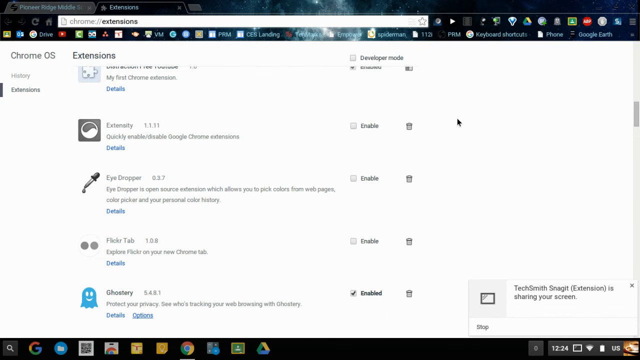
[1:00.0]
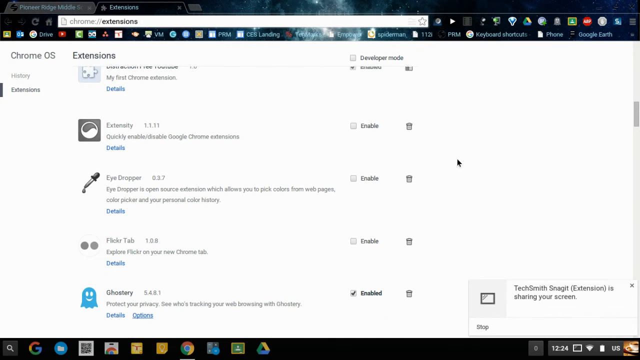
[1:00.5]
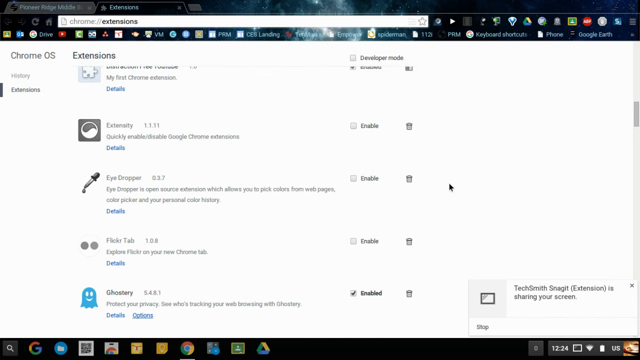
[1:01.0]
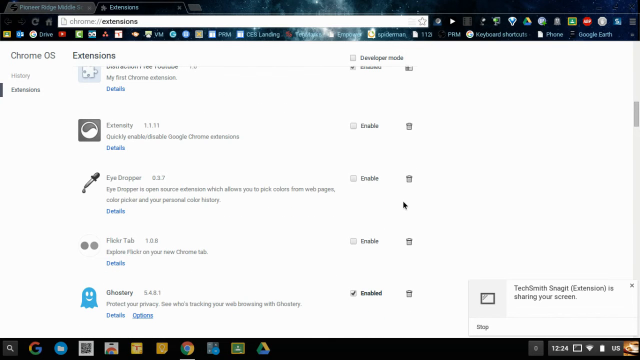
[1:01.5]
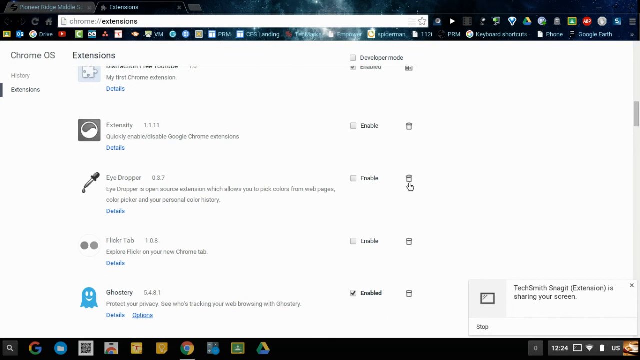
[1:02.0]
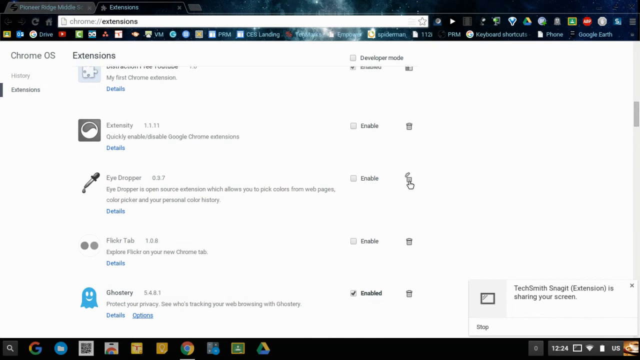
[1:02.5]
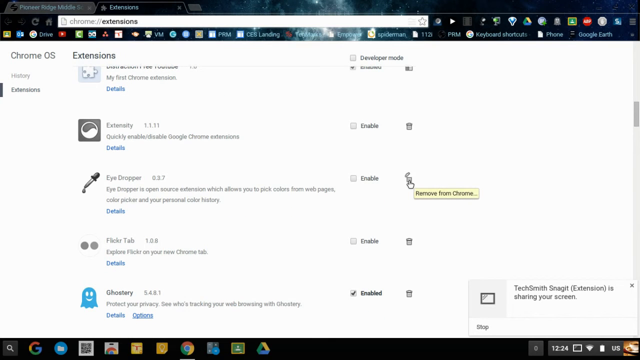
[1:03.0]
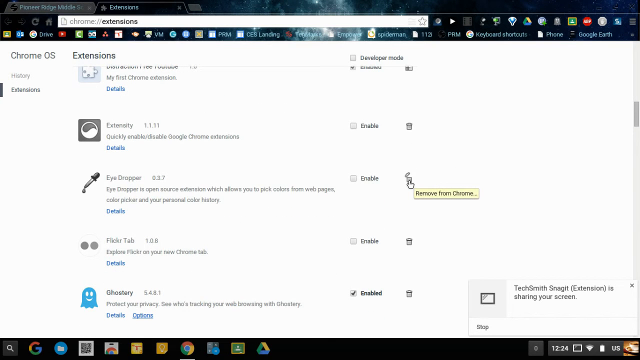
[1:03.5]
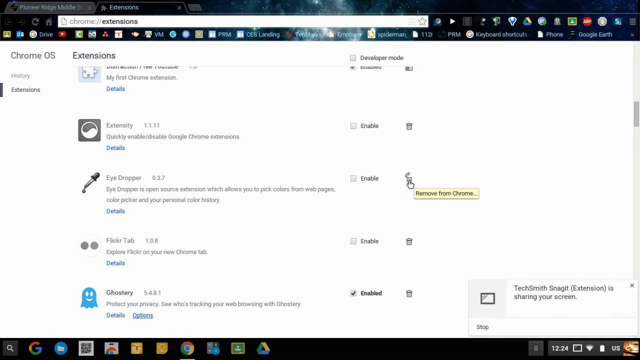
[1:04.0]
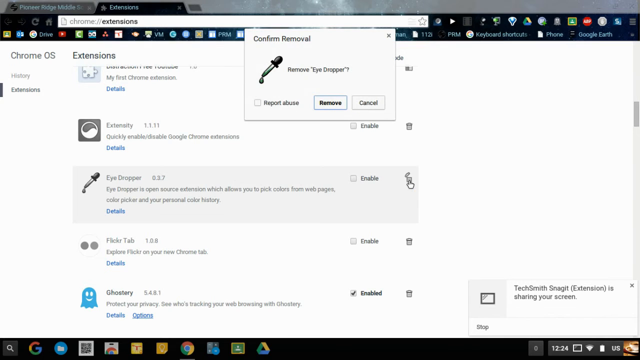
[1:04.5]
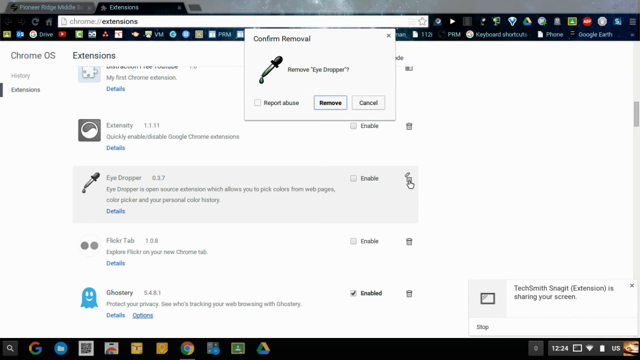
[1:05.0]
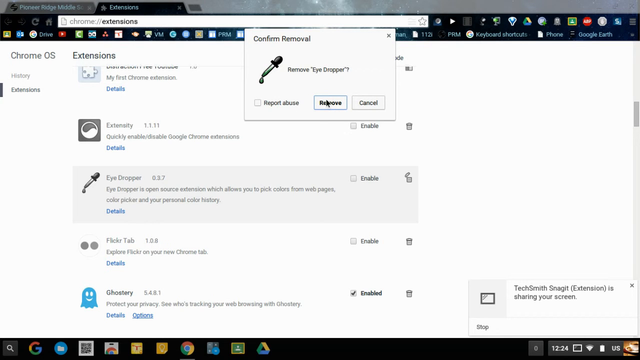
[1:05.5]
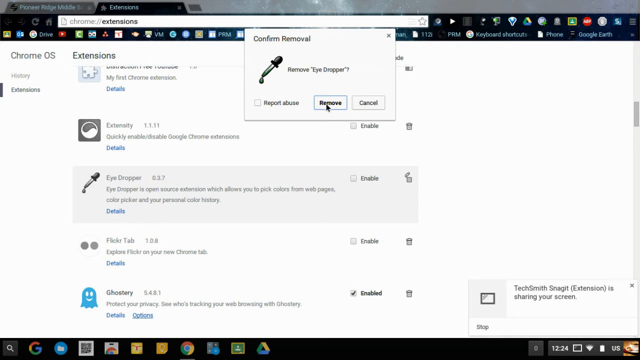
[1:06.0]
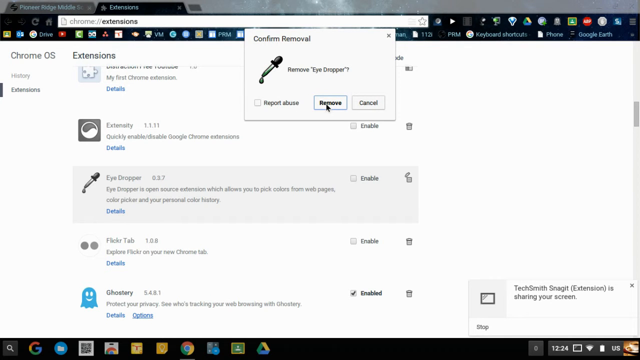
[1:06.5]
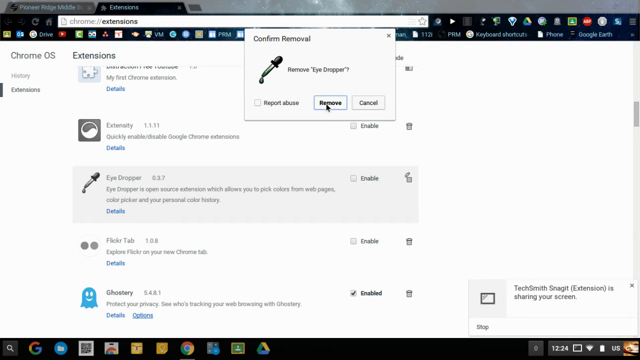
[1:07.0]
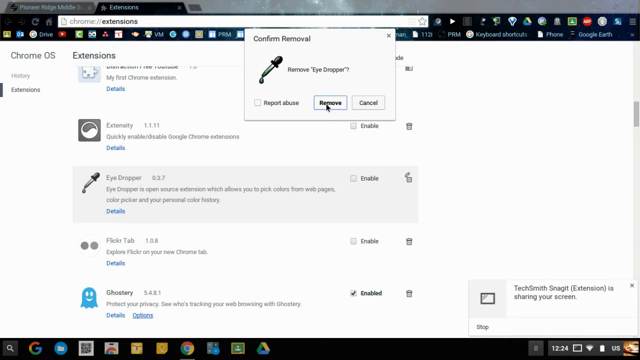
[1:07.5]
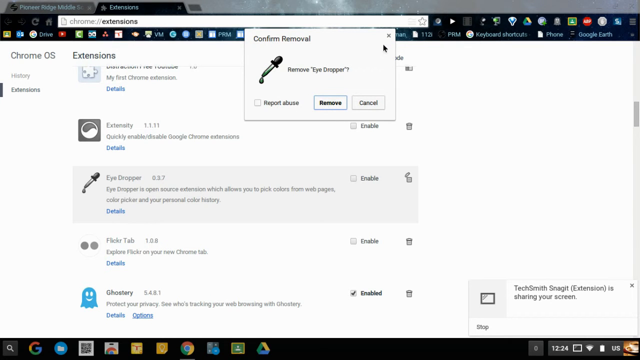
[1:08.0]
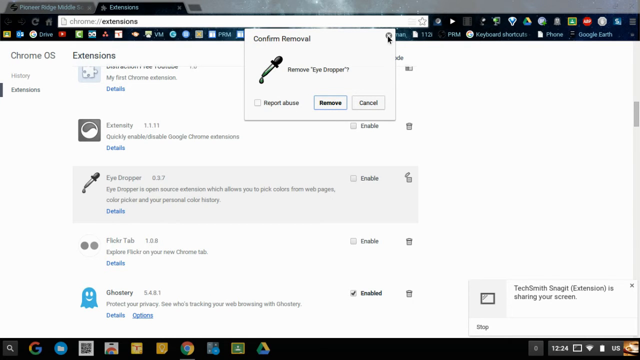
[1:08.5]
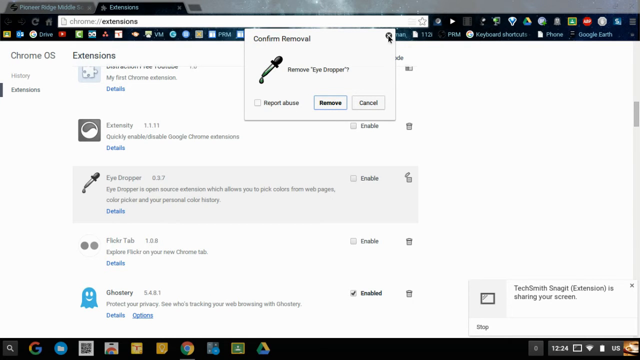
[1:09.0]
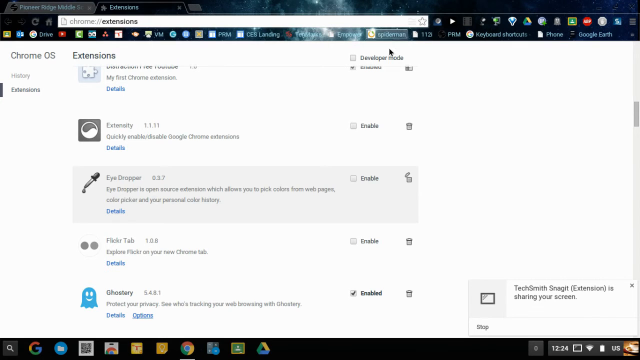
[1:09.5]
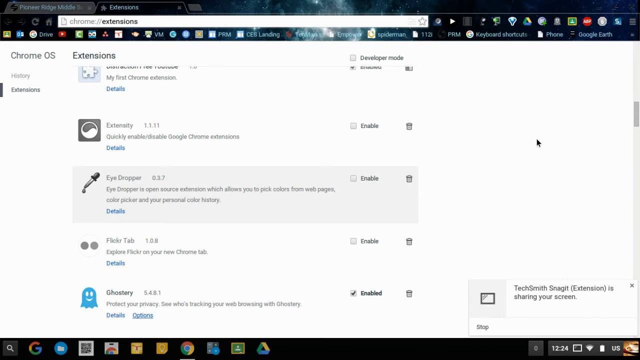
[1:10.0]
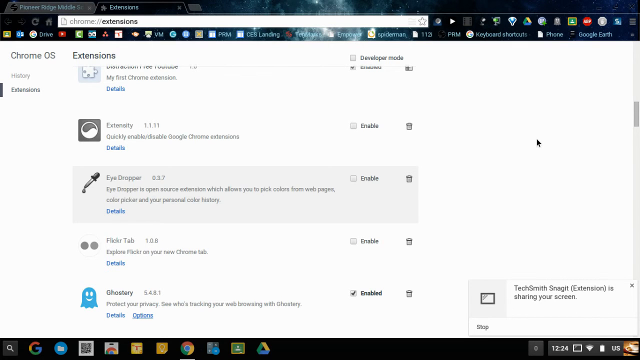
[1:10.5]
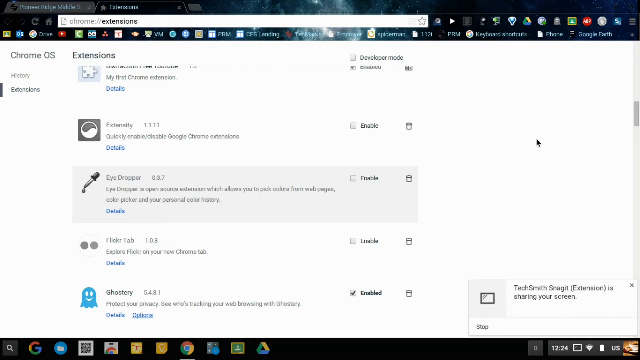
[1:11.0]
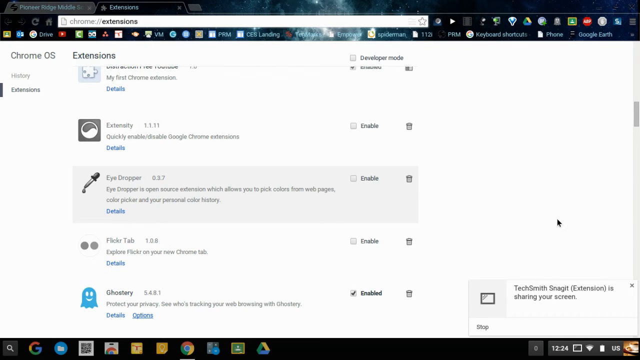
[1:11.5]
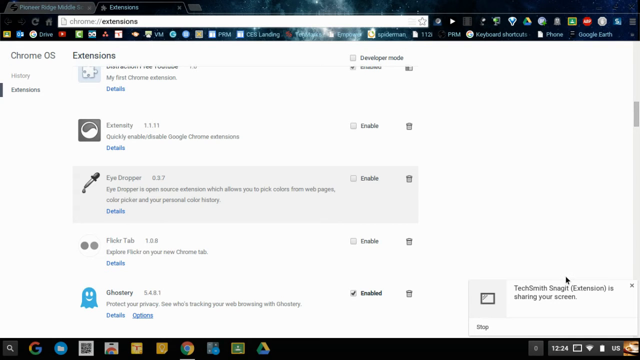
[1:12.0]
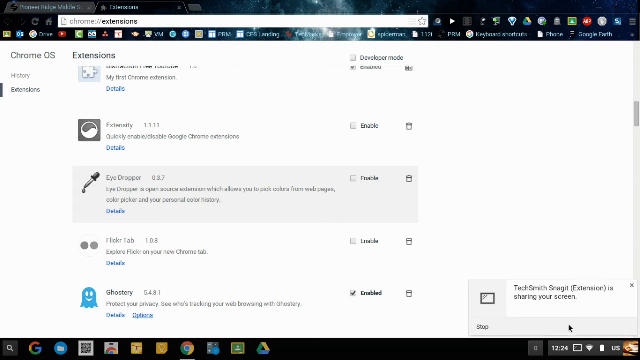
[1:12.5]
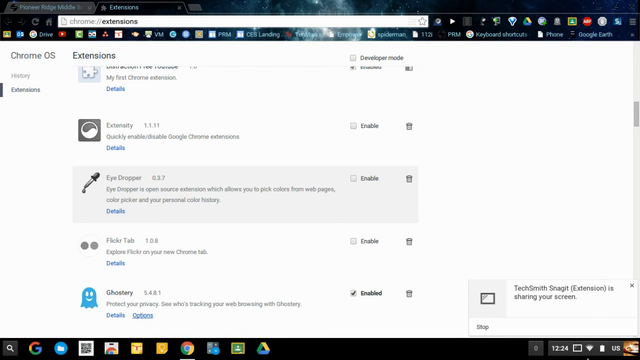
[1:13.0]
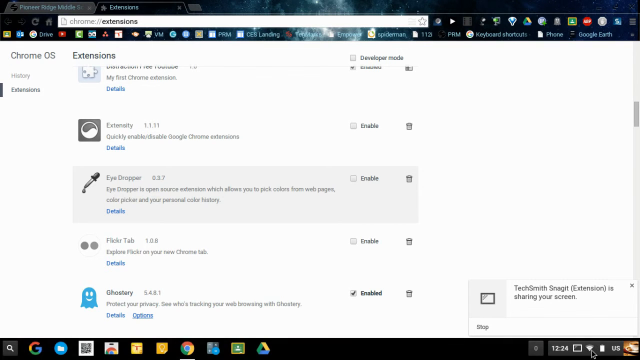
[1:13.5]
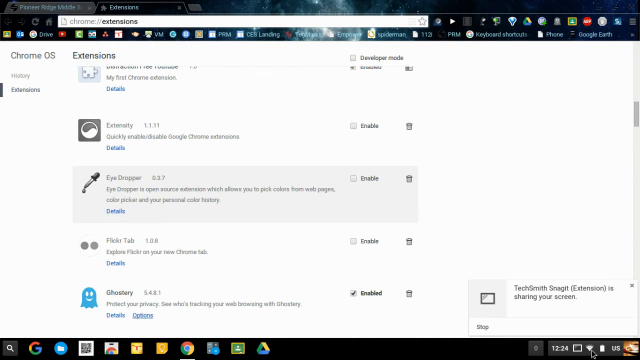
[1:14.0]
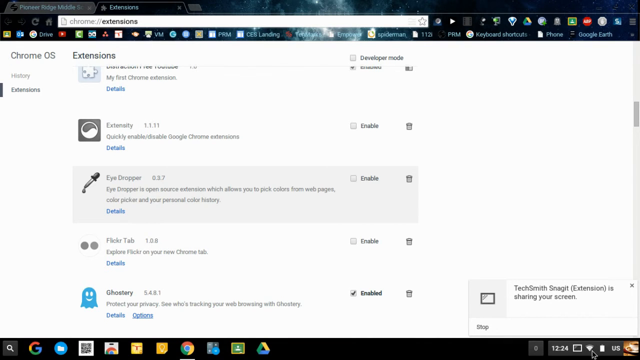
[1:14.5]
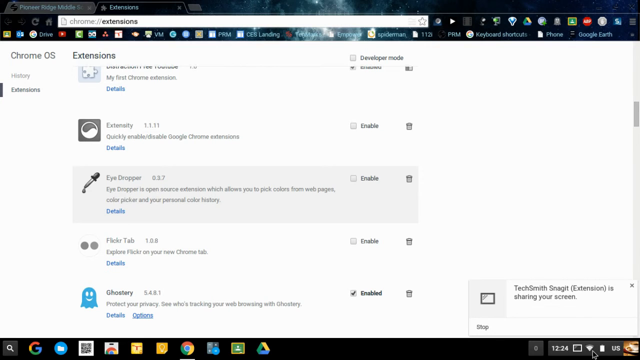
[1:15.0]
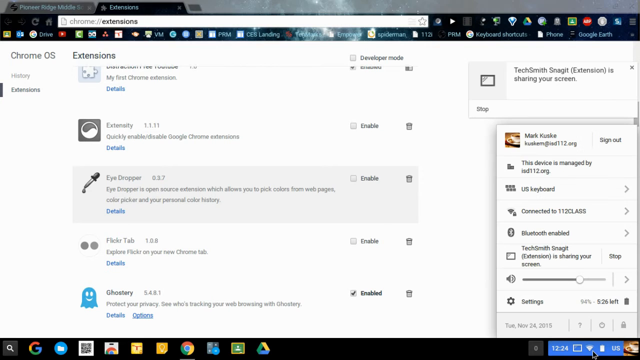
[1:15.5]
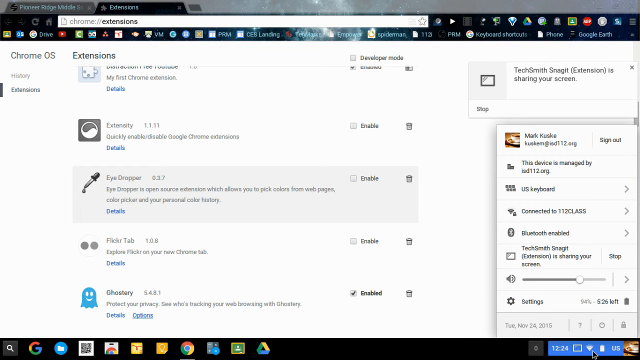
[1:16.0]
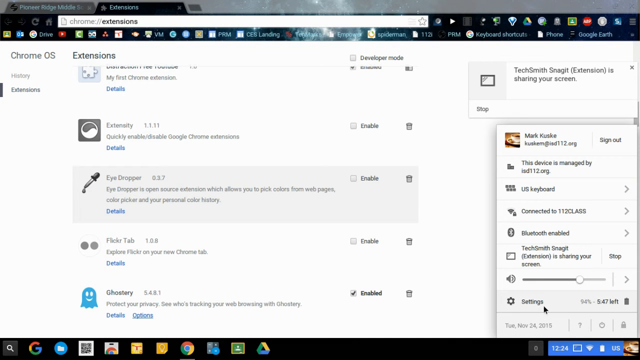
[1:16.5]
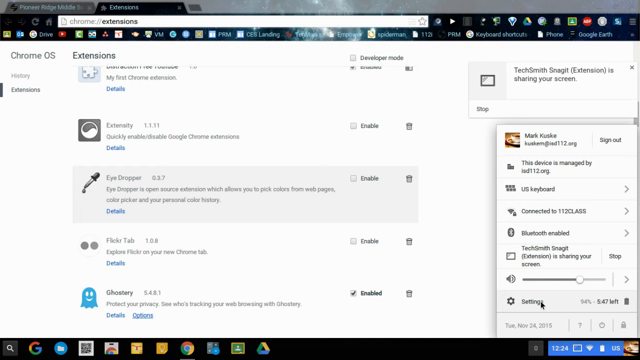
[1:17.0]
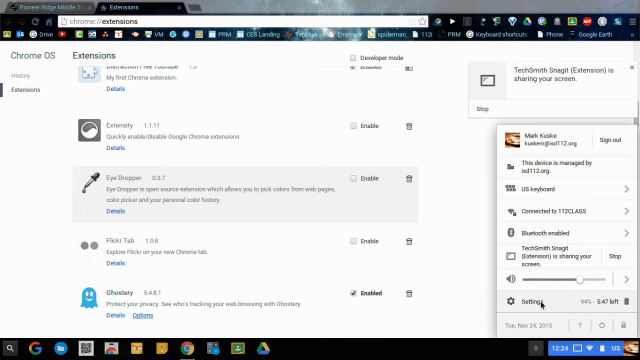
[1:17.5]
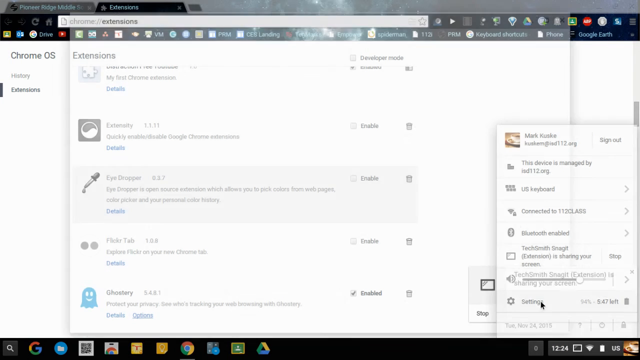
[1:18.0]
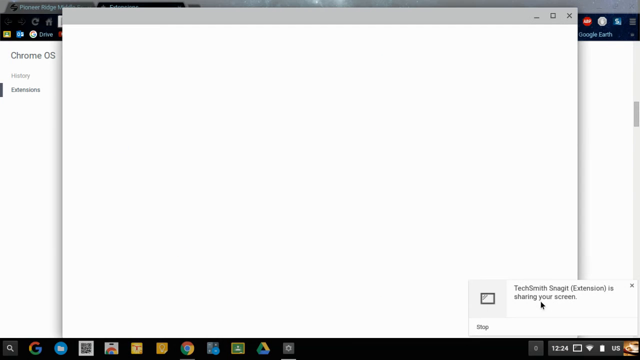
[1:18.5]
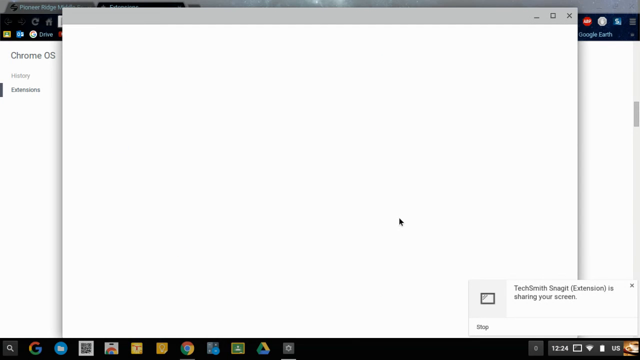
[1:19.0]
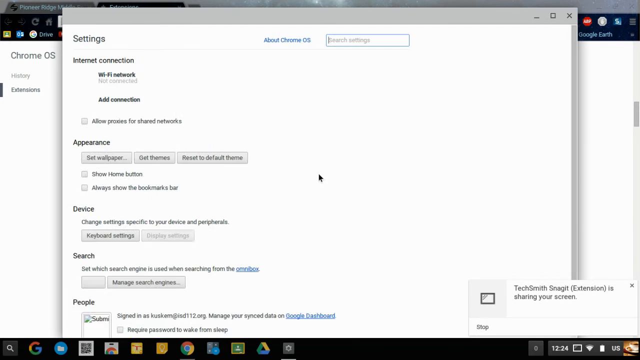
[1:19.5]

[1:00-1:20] The user starts the procedure for removing the Eyedropper extension from Chrome, pushing the trash can button, which brings up a pop-up asking to remove Eyedropper or cancel, but they cancel out of the operation. They then pull up a panel on the side that reads "Mark Kuski," "KuskiM at IED112.org," "This device is managed by IED112.org," "U.S. keyboard," "connected to 112 class," "Bluetooth enabled," and "TechSmith Snagit is sharing your screen" with "Stop." The speaker volume is about three quarters of the way up, and some settings are hidden. The panel is then dropped, and a new settings screen pops up showing add connection, appearance, device, and search. Most things are grayed out, but always show bookmarks can be turned on or off, and touchpad settings, keyboard settings, and display settings are among the other available options.